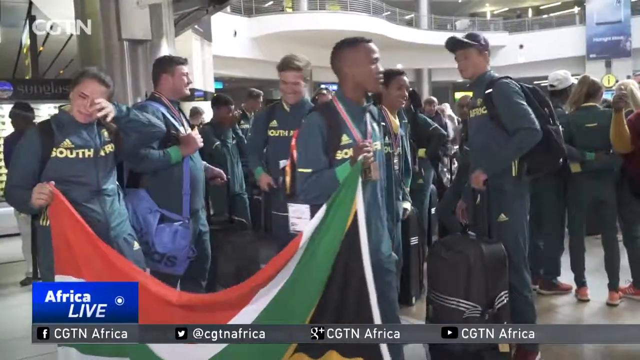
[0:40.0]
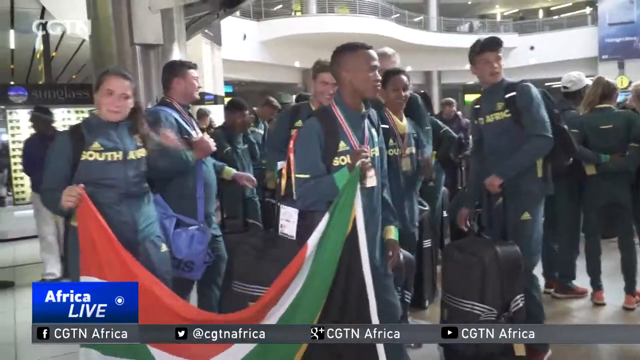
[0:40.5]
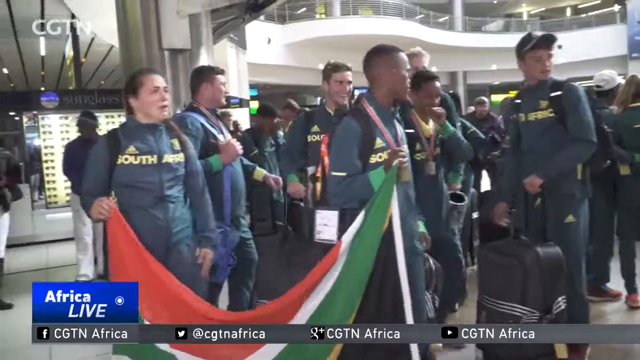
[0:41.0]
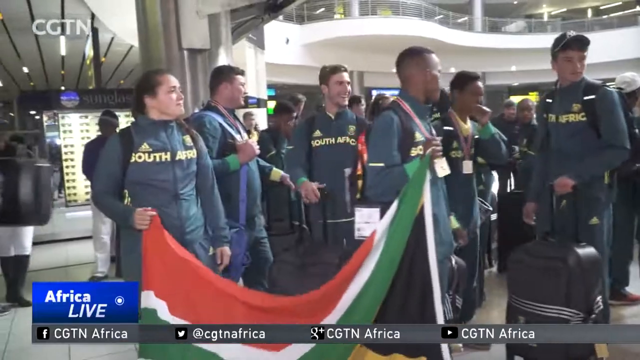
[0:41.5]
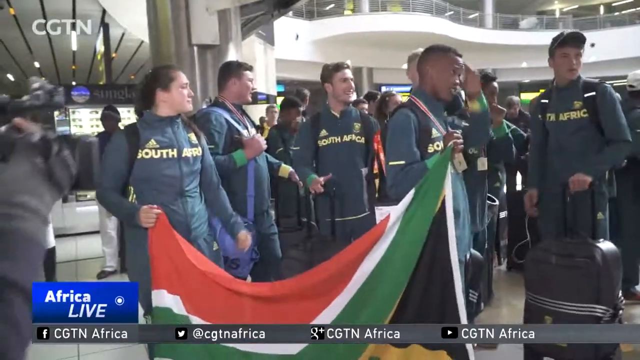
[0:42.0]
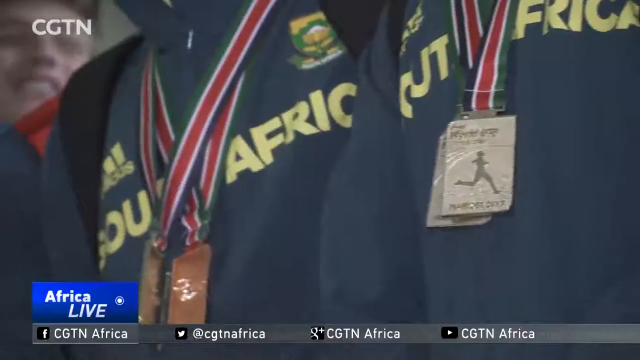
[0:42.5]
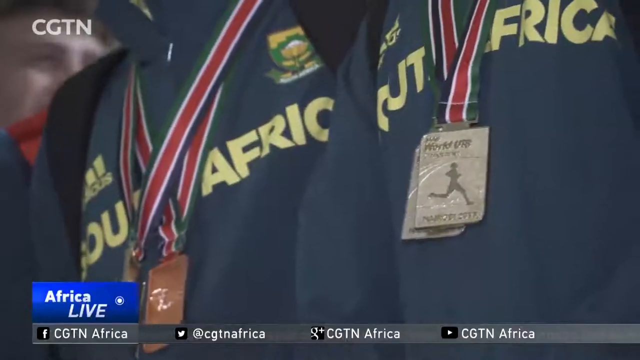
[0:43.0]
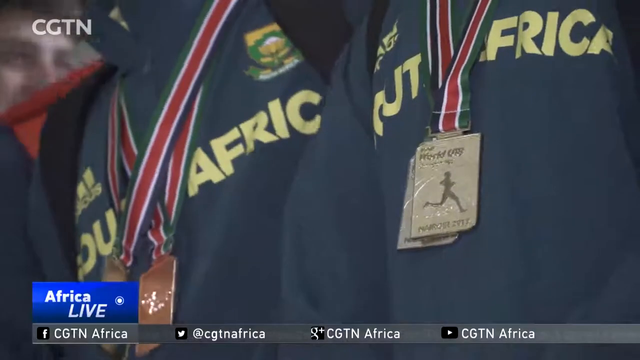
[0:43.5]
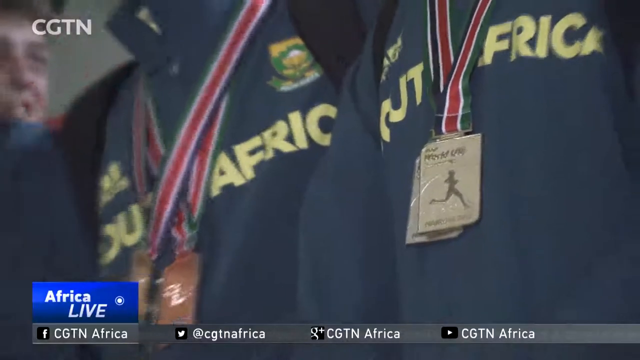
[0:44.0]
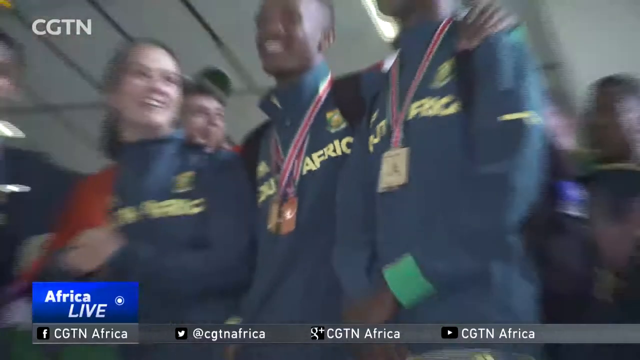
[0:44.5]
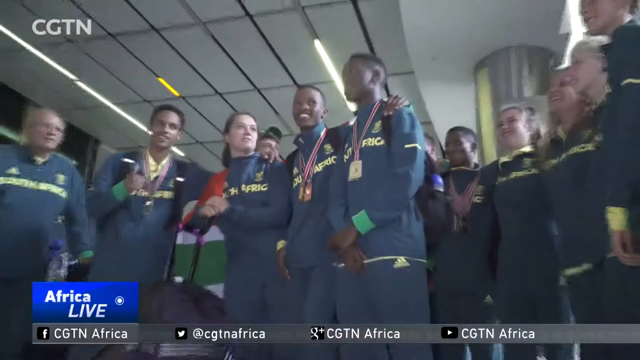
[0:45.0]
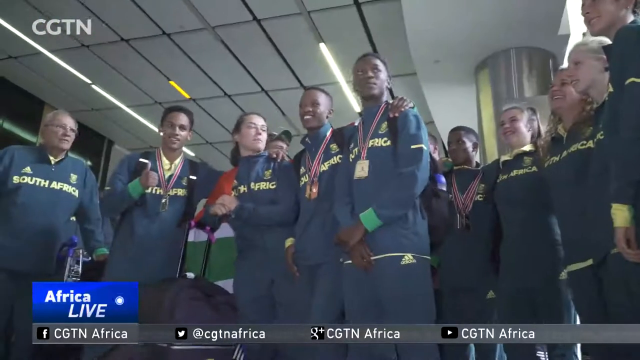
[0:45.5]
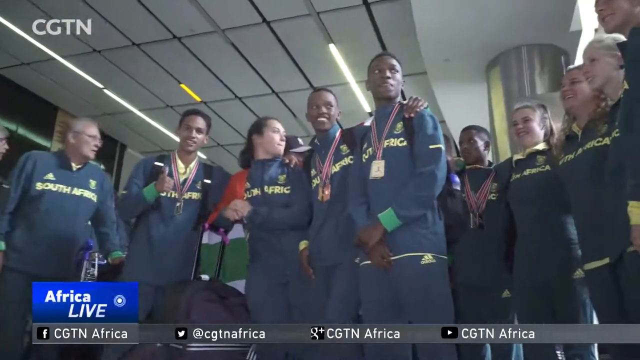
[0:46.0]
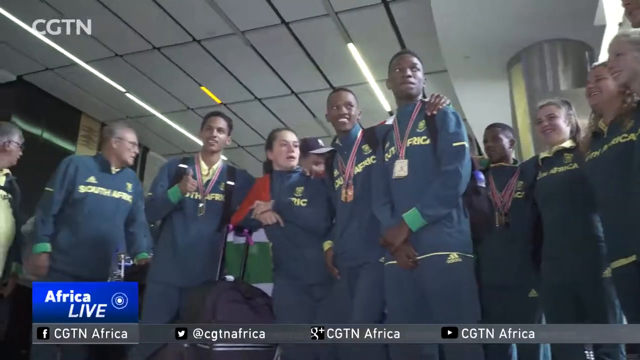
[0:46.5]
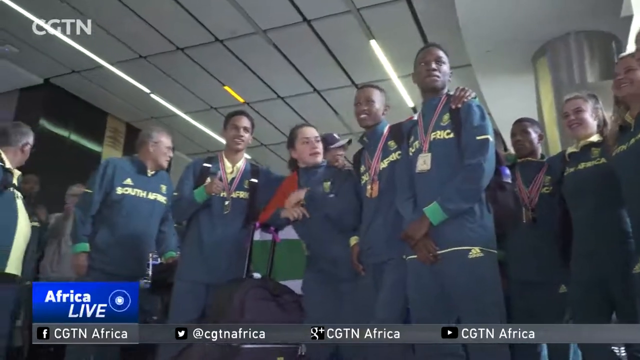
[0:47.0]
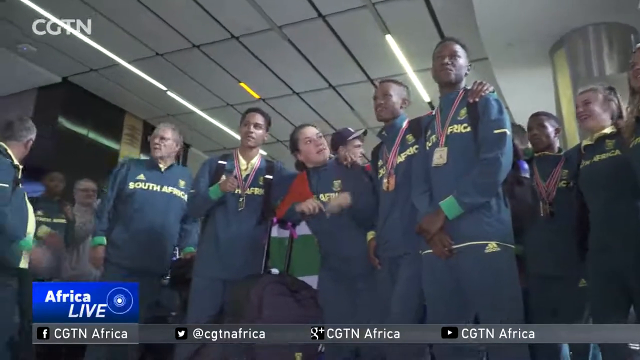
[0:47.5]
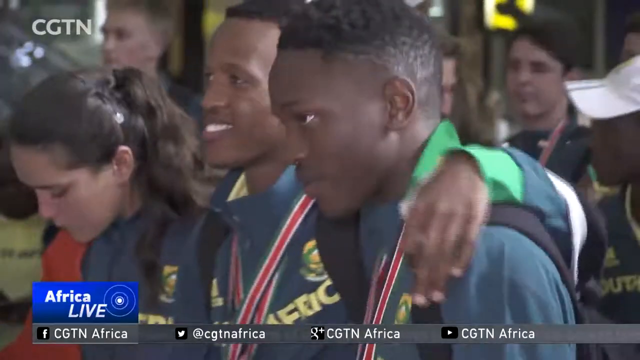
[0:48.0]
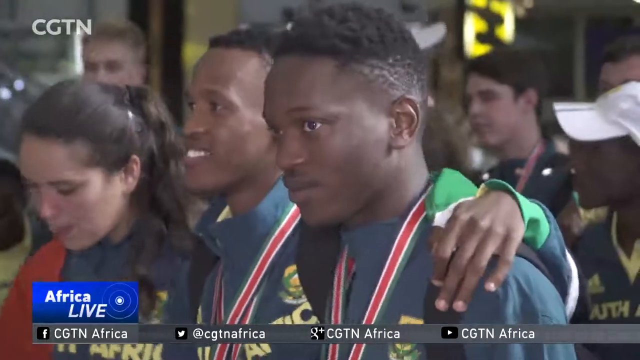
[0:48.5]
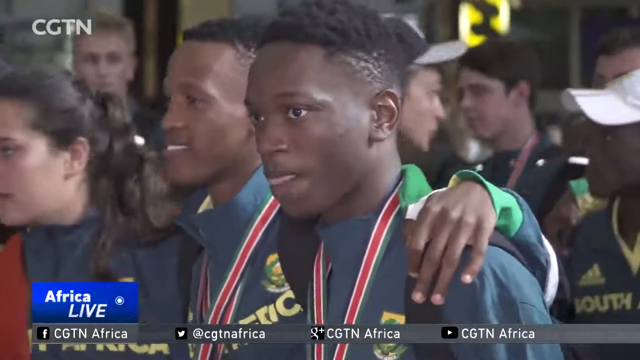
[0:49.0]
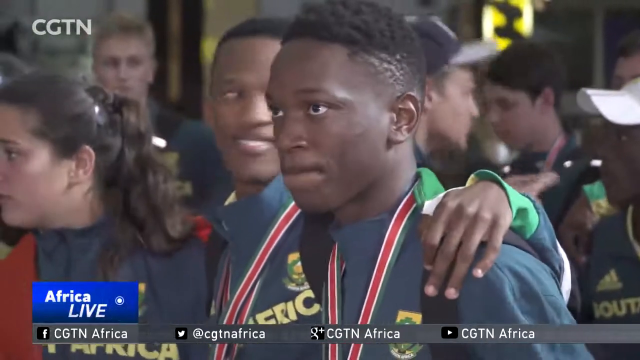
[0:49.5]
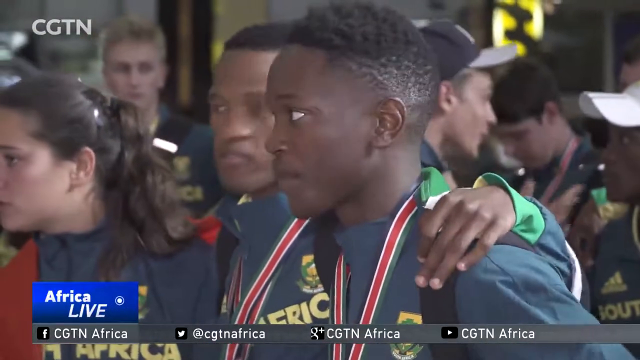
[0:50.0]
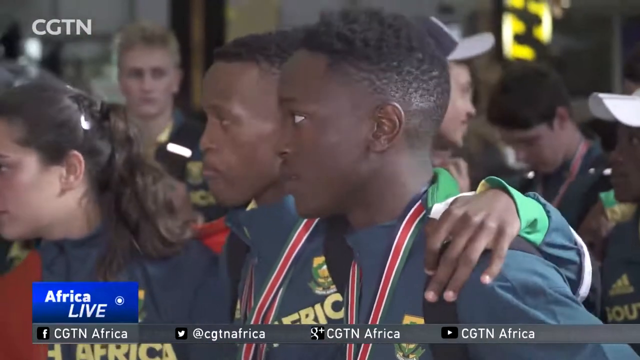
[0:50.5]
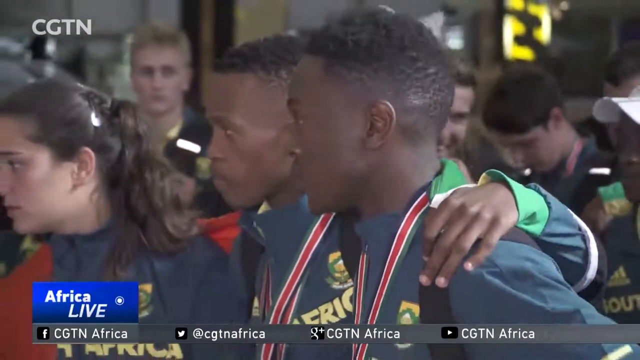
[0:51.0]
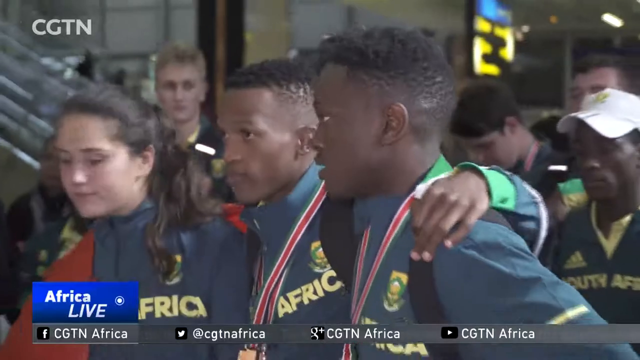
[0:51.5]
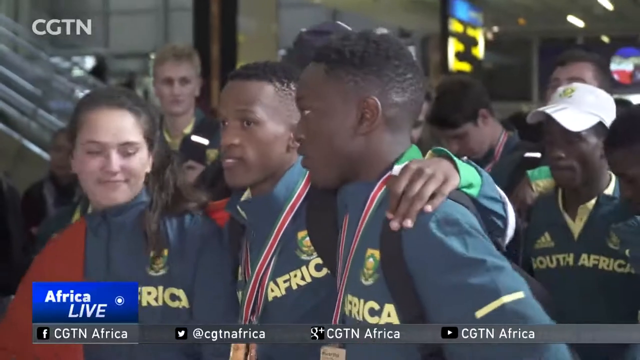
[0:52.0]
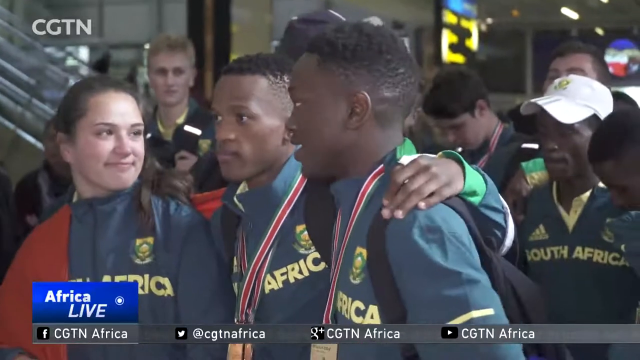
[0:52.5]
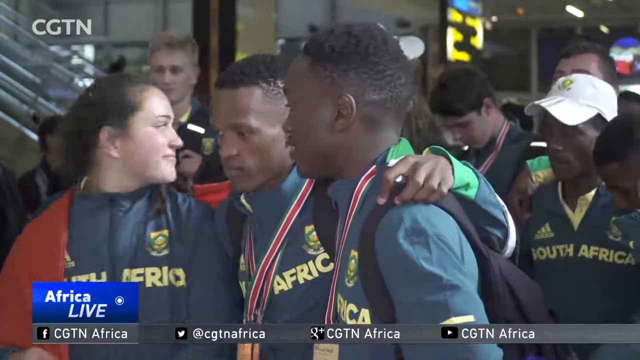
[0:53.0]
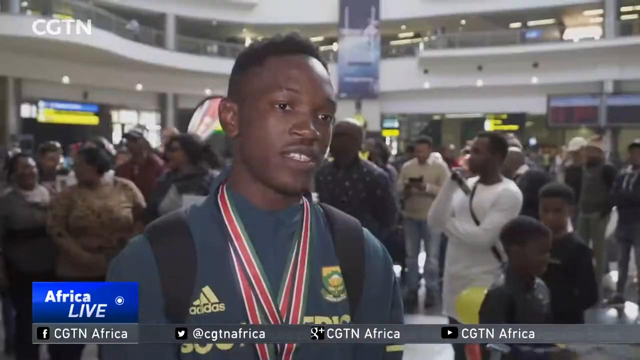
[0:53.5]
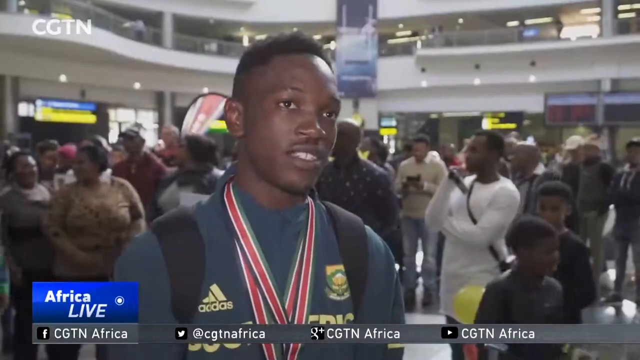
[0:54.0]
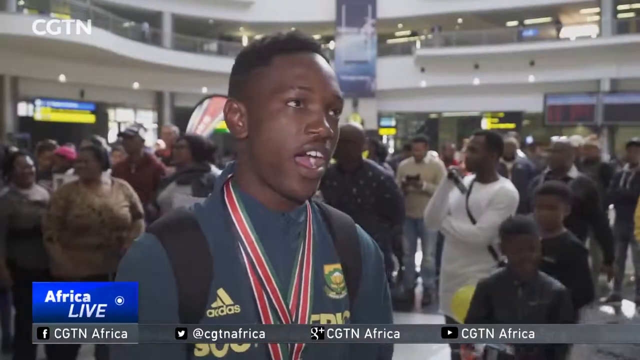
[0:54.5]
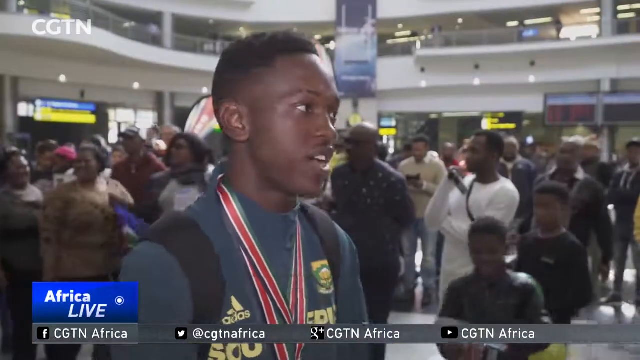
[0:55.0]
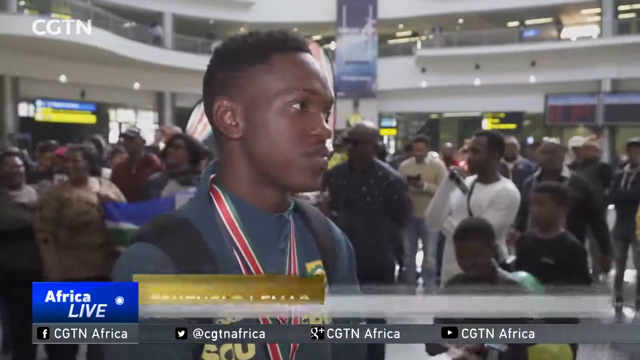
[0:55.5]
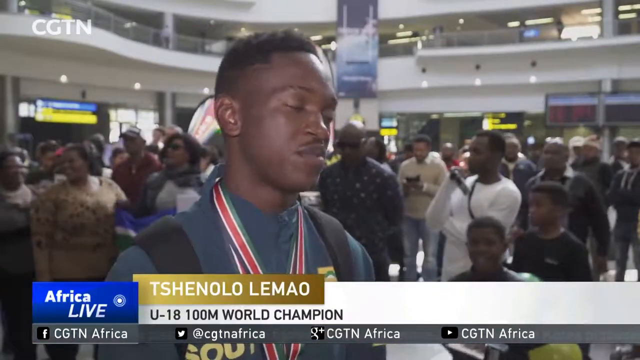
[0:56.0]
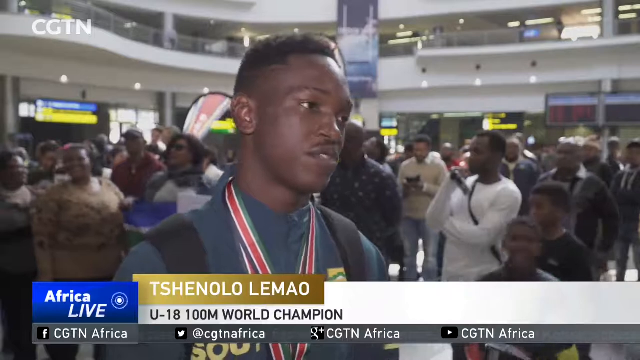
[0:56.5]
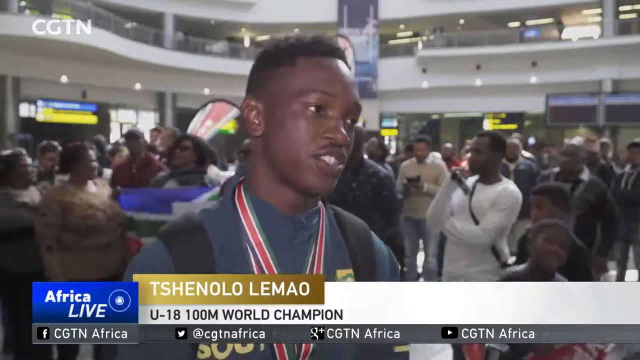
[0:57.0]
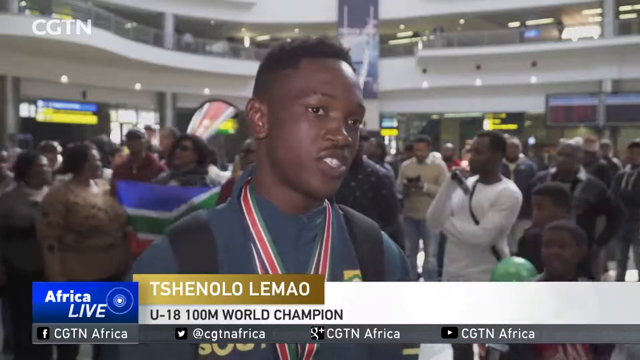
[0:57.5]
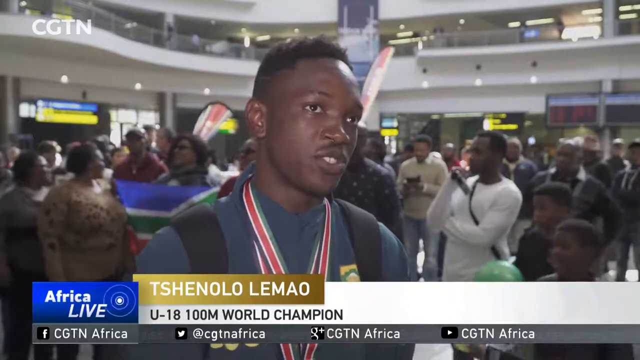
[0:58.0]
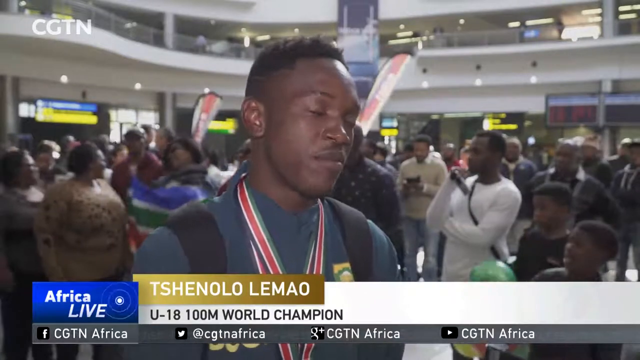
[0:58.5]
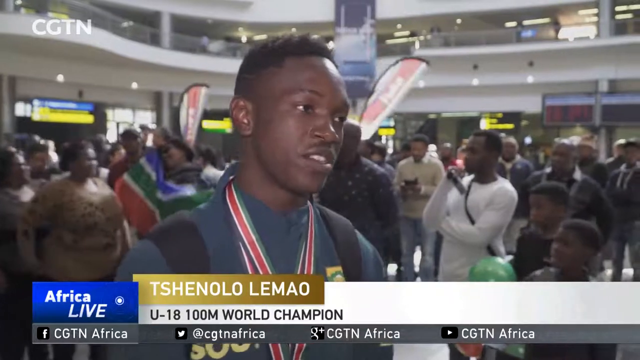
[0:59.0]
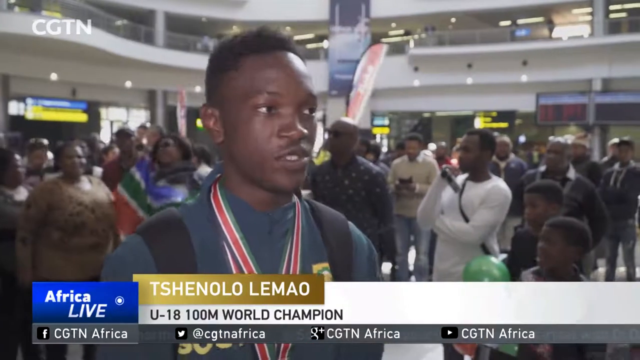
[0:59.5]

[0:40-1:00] The South African athletic team arrives home in a rather modern airport in a very emotional scene. All wear identical two-piece sweatsuits or tracksuits with the words "SOUTH AFRICA" in yellow capital letters and the Adidas logo on the left side of the chest. They are men and women, both white and black, all wearing athletic sneakers. The lower left corner reads "Africa Live" in white text on a blue background, and the bottom of the screen says "CGTN Africa" with what appears to be a YouTube button and a Twitter icon. An interview begins with an athlete named on screen as "Tshenolo Lemao," and below that it reads that he is a "U18 100 M world champion."